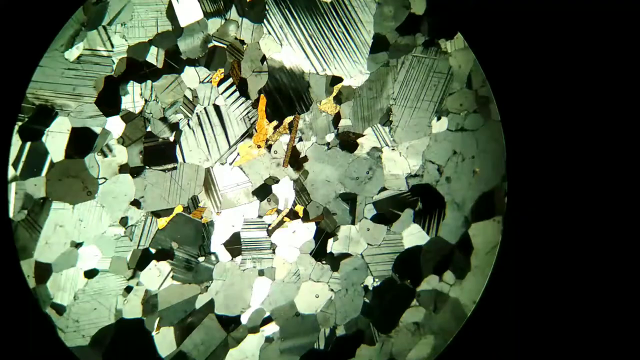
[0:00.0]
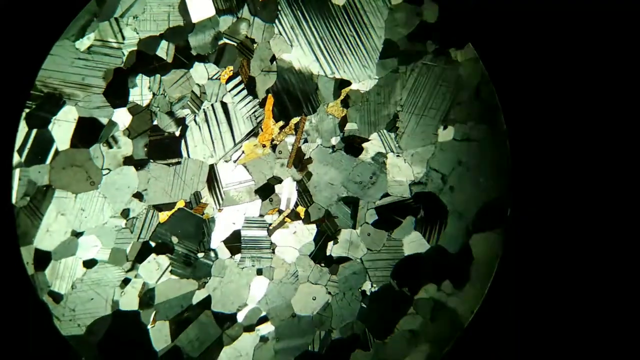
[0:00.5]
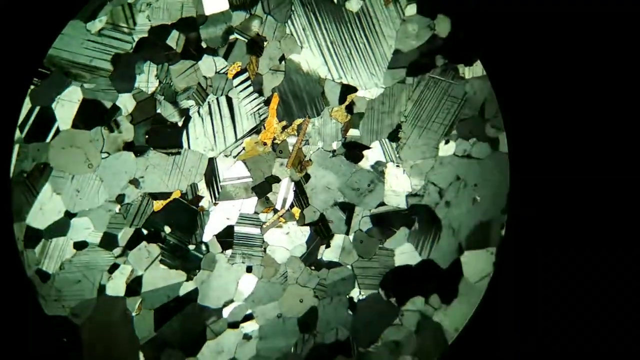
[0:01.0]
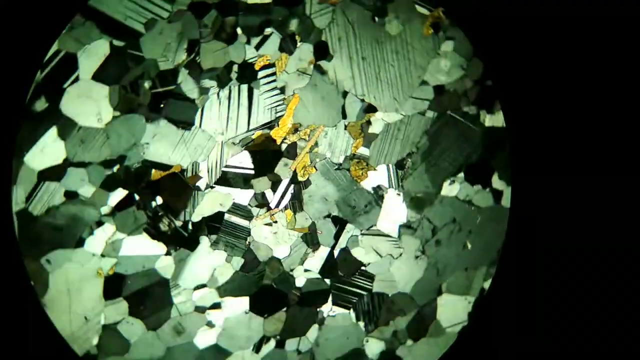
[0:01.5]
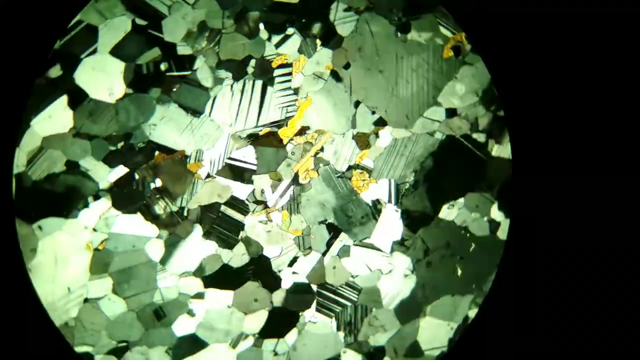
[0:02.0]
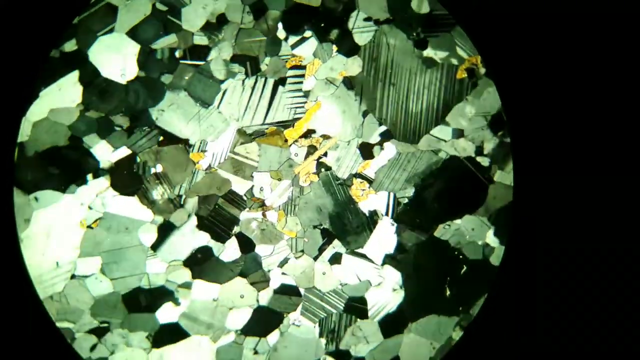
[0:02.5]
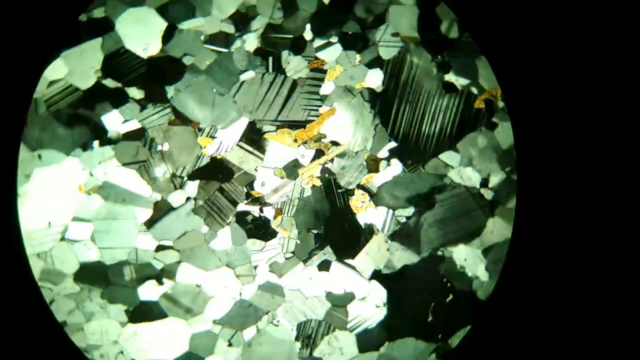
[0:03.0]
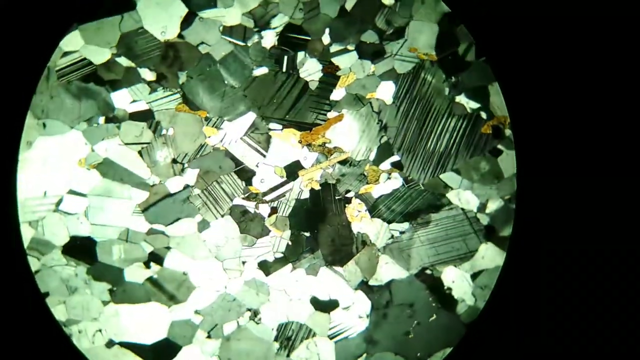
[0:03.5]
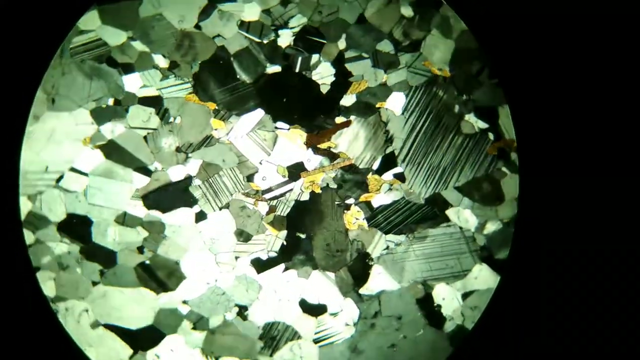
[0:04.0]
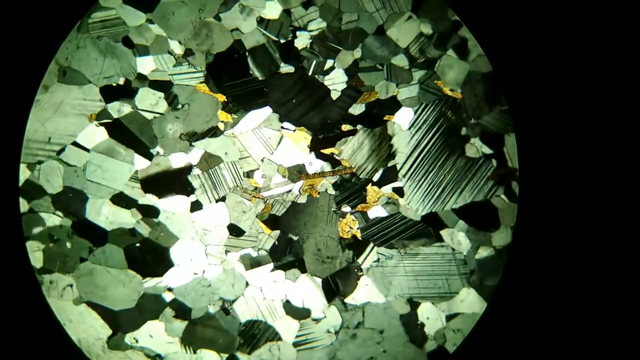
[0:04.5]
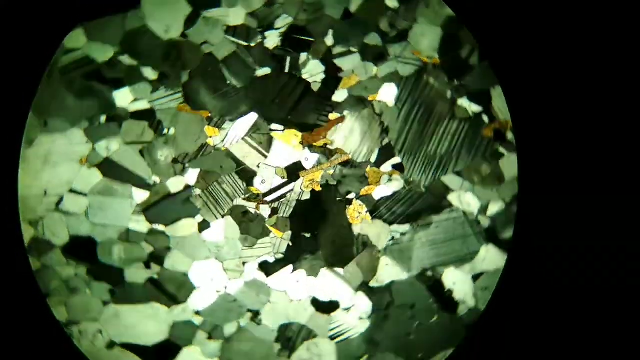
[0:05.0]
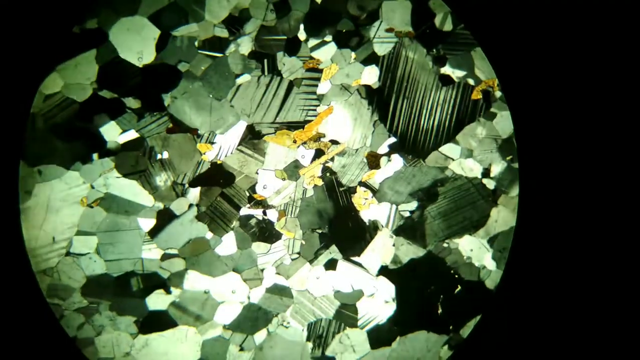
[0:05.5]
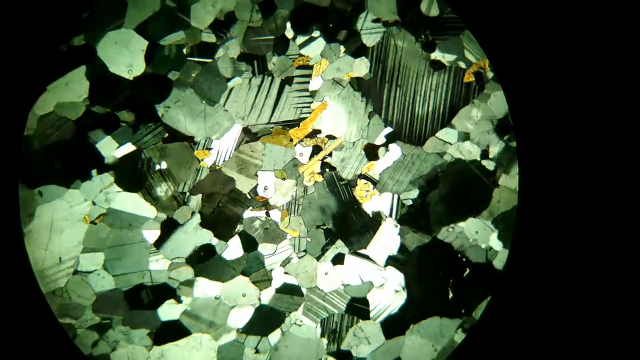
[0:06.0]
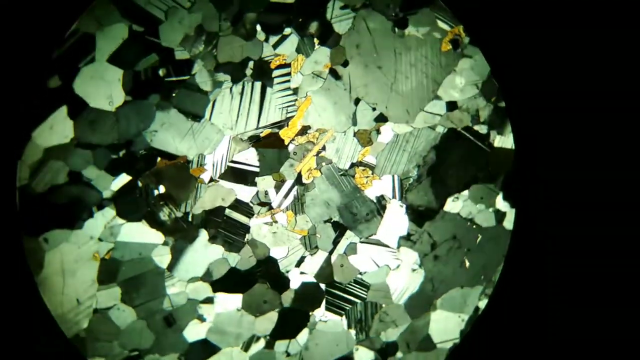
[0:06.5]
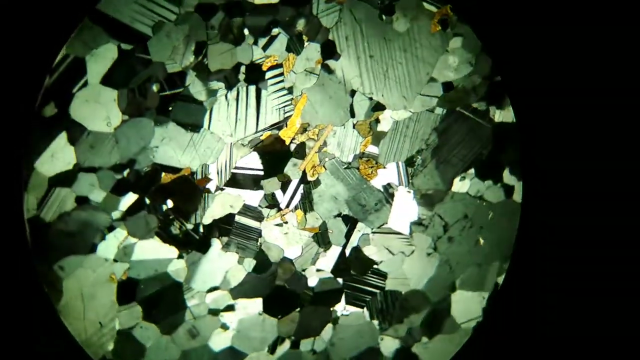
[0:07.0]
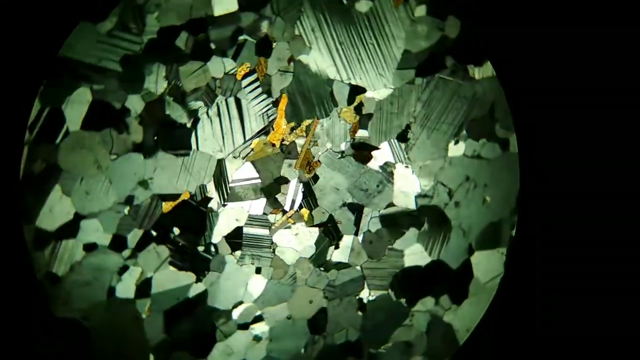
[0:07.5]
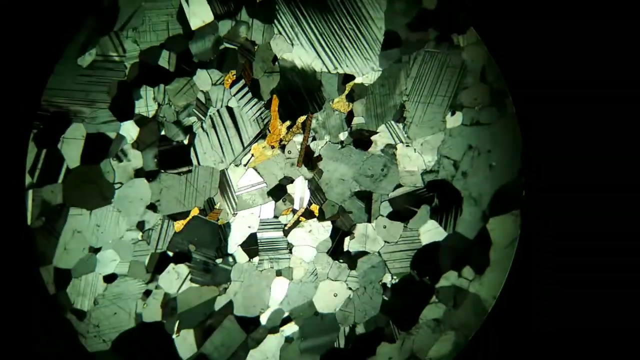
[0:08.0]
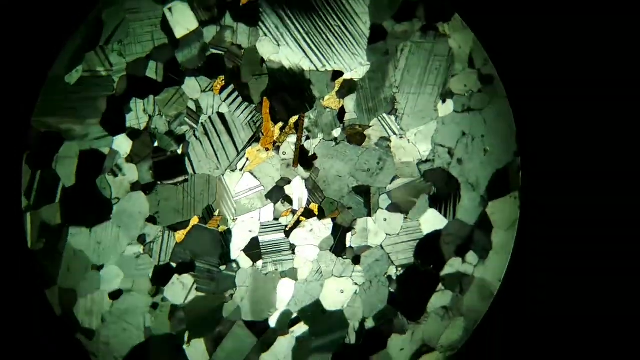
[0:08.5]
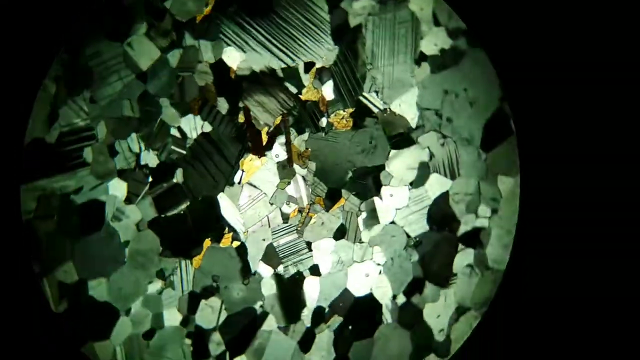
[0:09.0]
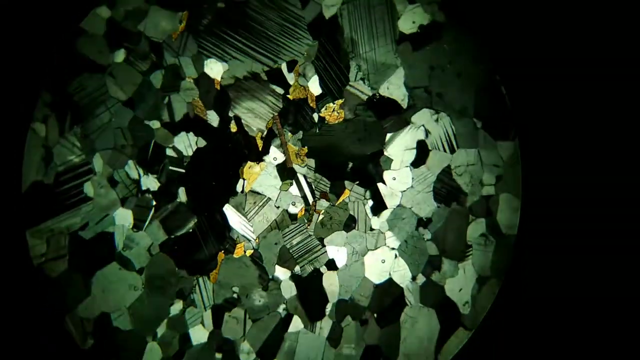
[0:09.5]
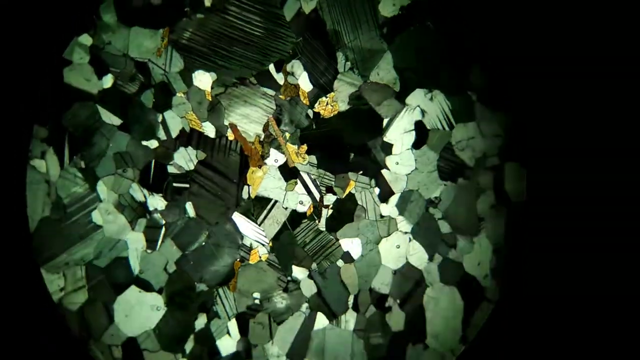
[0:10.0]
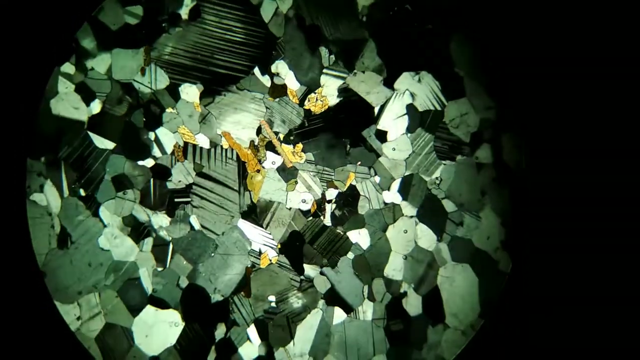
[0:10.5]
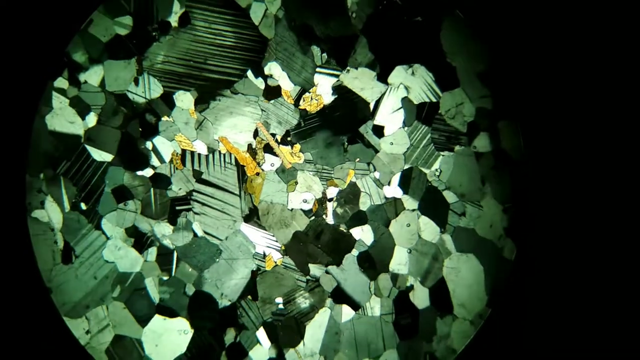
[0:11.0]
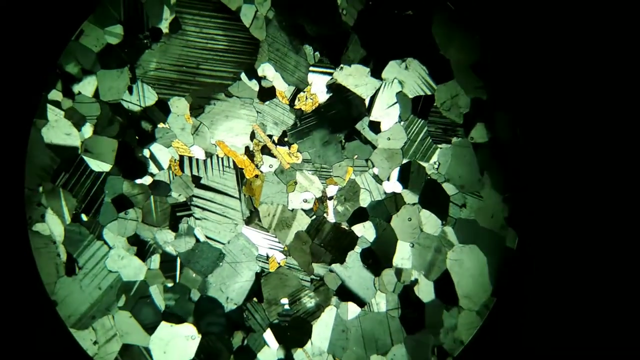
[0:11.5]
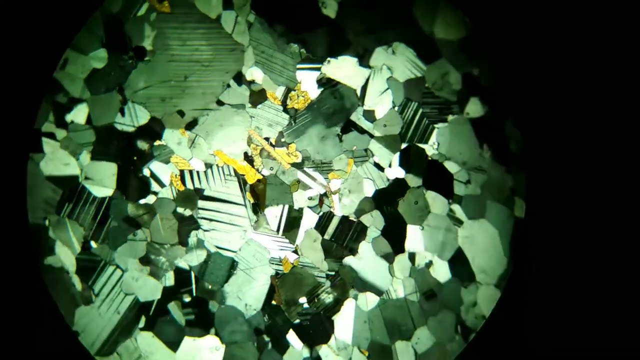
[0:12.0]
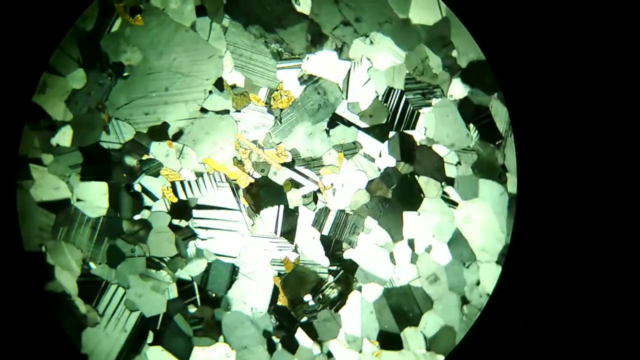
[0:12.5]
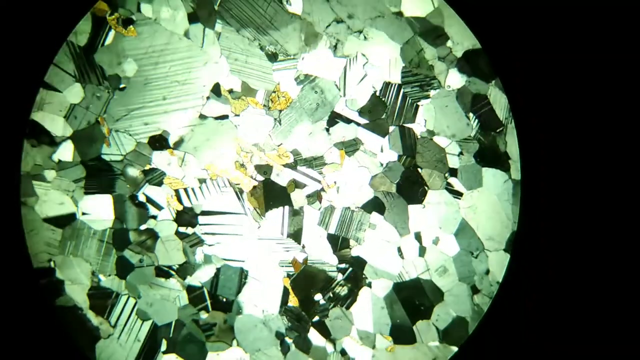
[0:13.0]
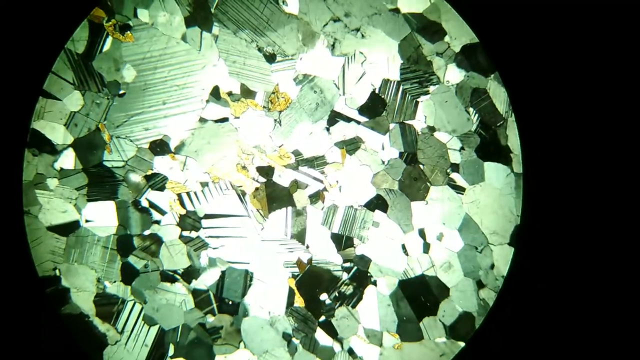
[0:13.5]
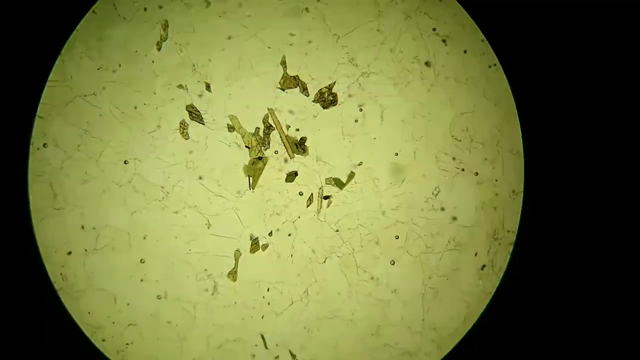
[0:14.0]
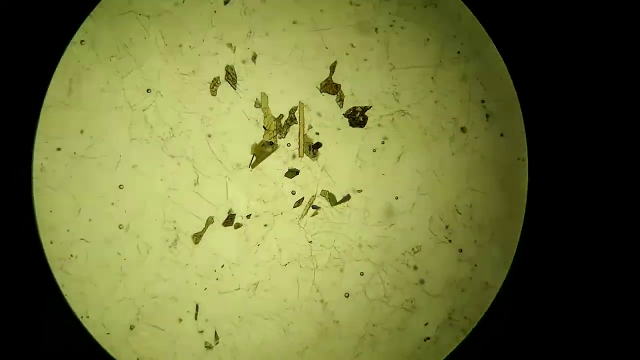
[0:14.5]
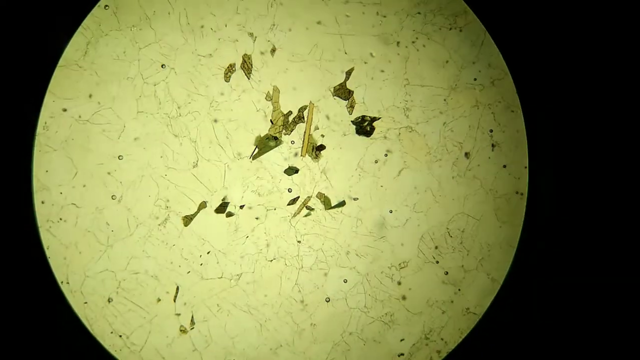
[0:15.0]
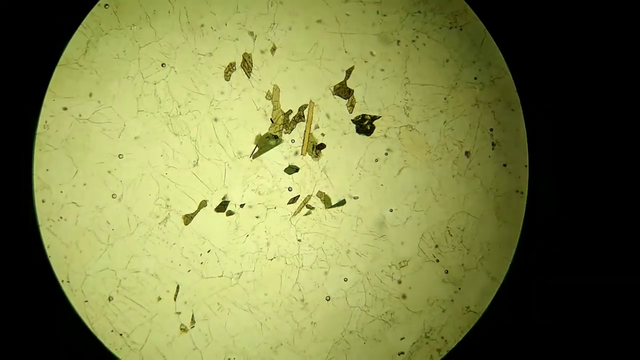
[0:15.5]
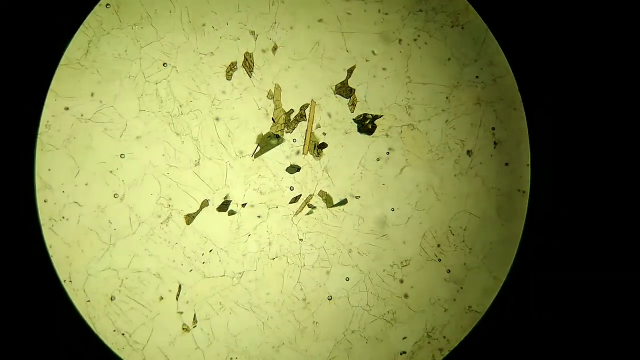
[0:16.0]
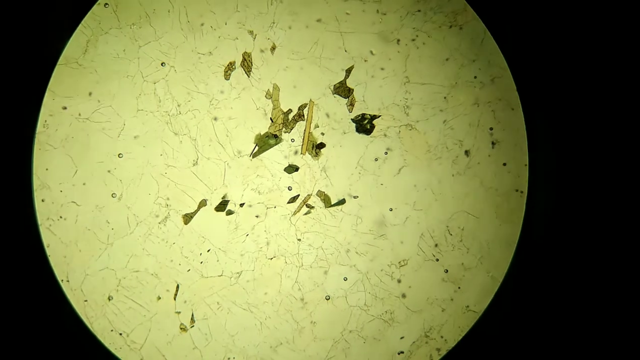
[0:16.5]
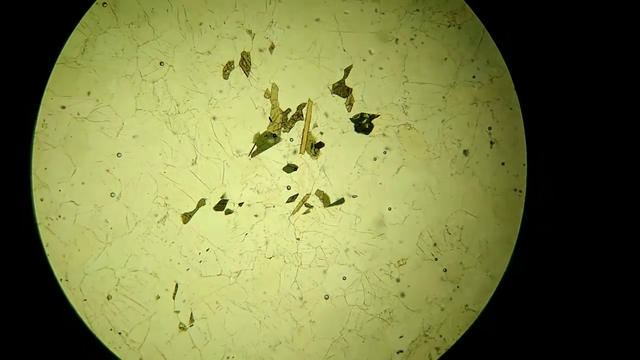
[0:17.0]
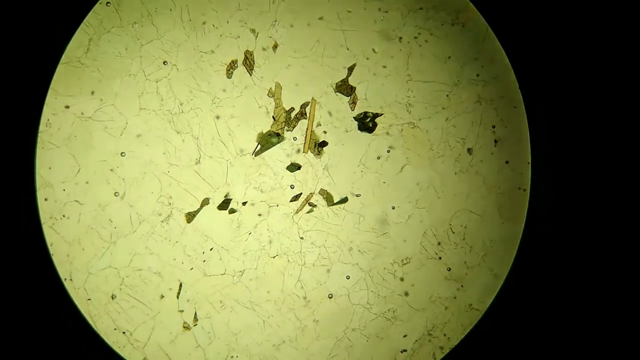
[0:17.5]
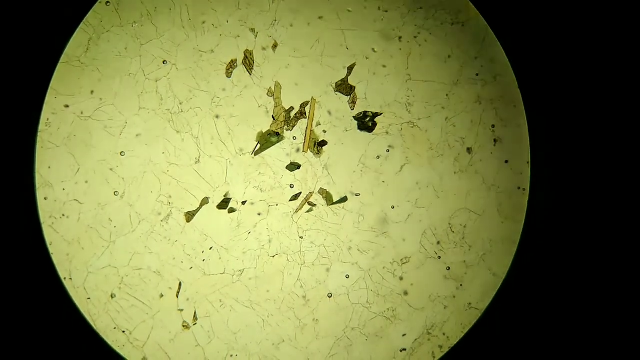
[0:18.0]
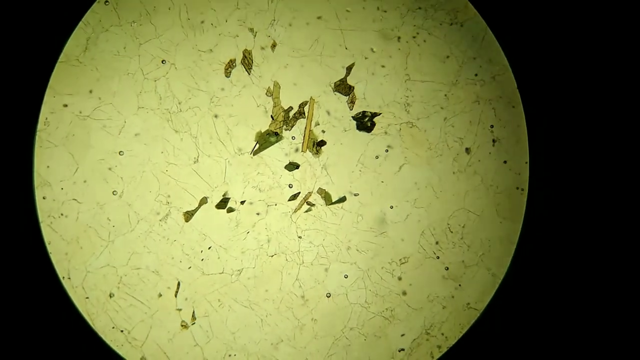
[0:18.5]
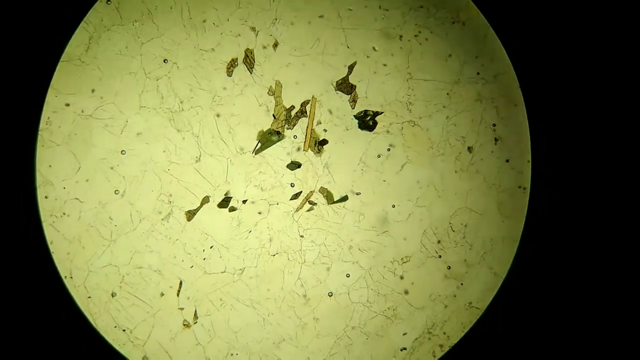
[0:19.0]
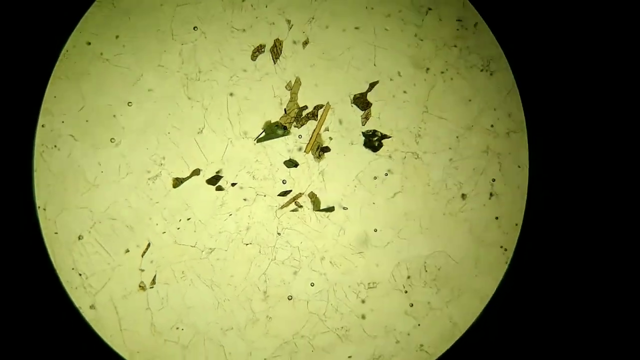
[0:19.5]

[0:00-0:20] A very close-up view shows some type of material, possibly a gemstone, a rock, a glass, or something grown in a lab. It appears to be under high magnification, as if through a high-powered magnifying glass or microscope, revealing the imperfections in it. It has several colors, from dark greens to light greens and everything in between, with yellows and a little bit of brown spread sparsely throughout.